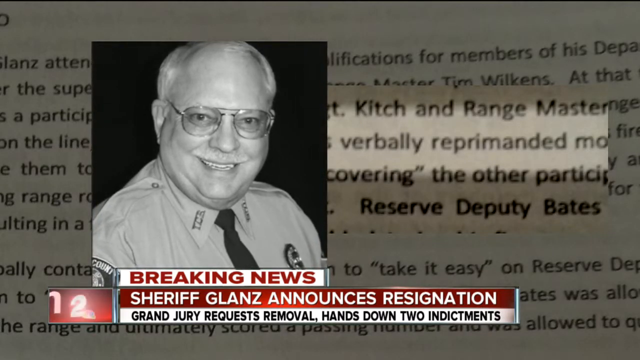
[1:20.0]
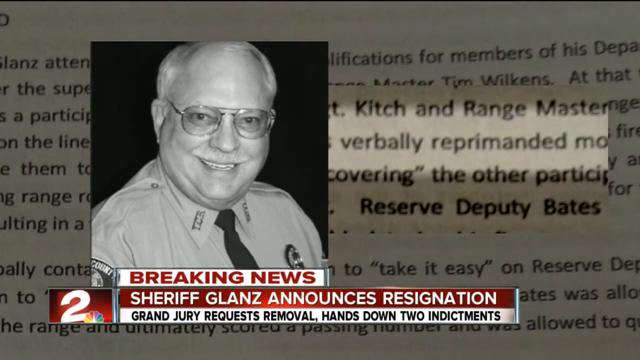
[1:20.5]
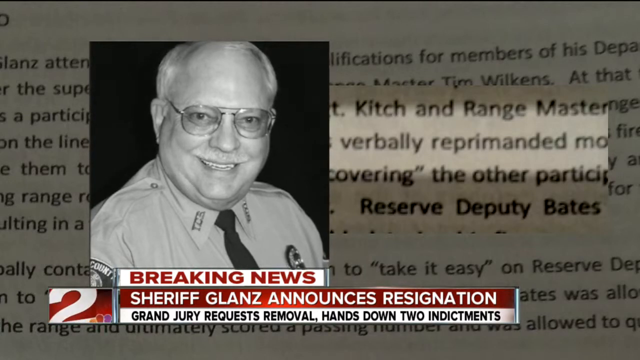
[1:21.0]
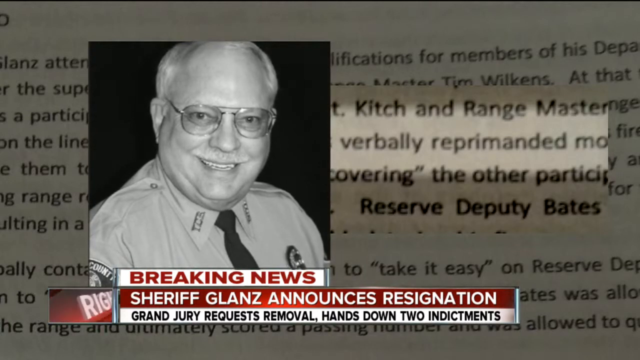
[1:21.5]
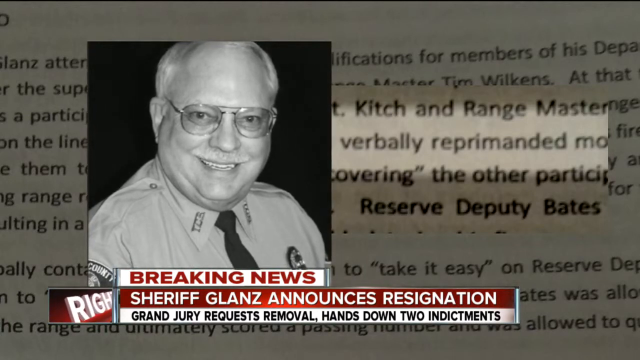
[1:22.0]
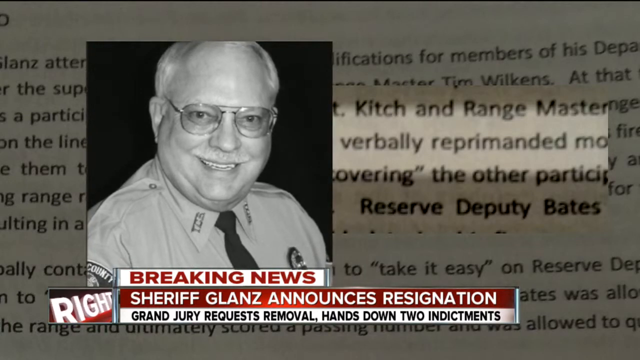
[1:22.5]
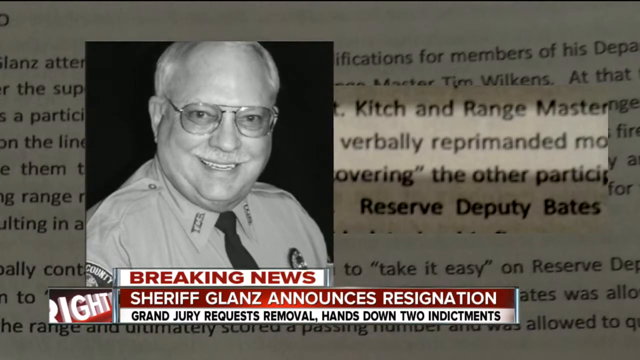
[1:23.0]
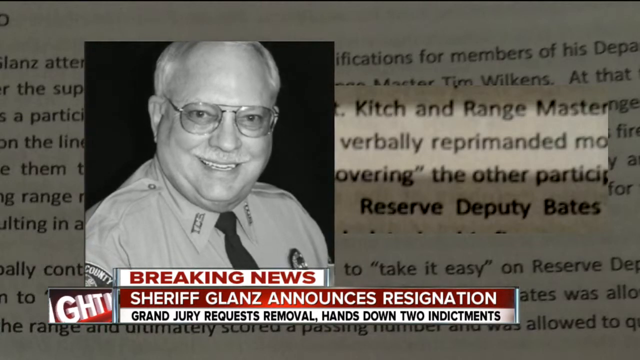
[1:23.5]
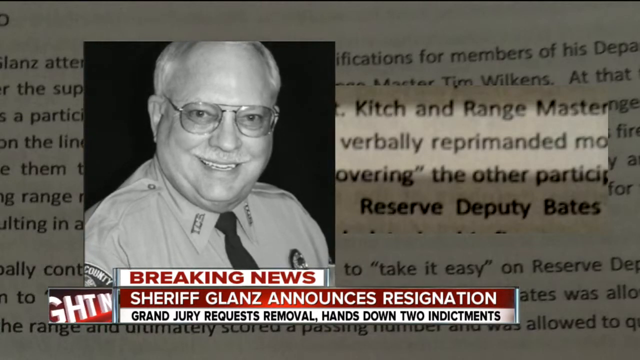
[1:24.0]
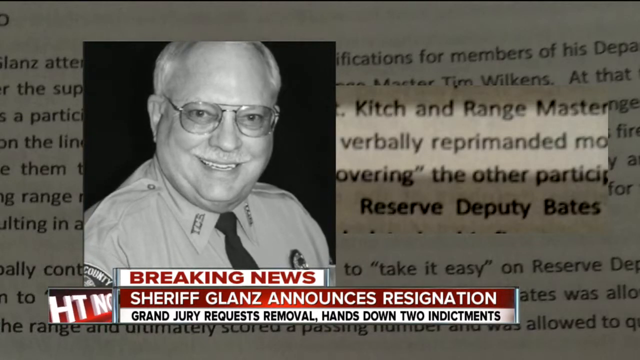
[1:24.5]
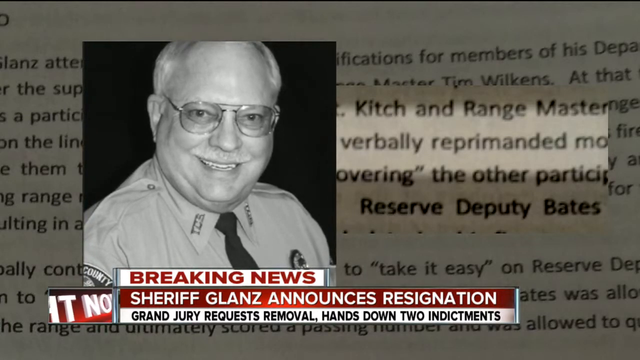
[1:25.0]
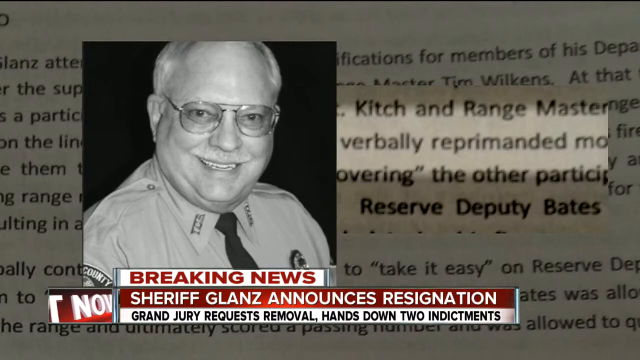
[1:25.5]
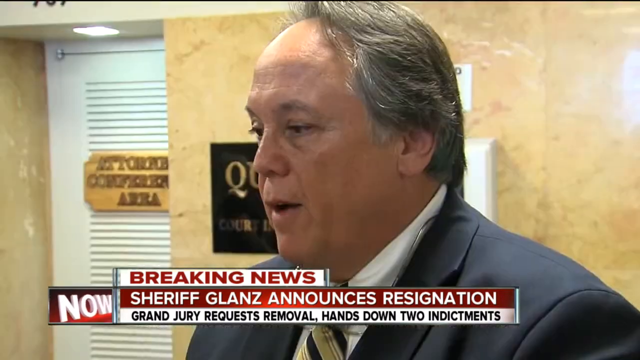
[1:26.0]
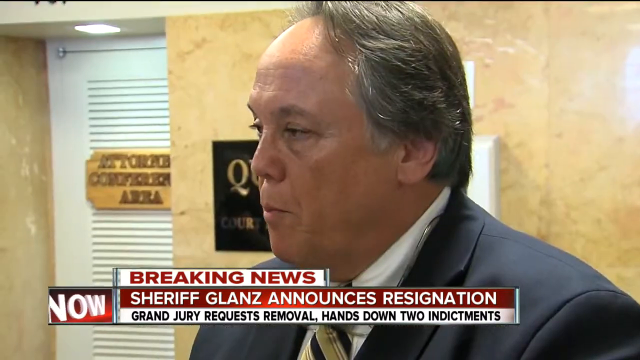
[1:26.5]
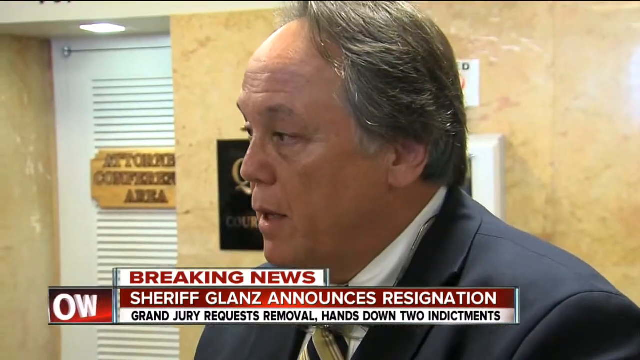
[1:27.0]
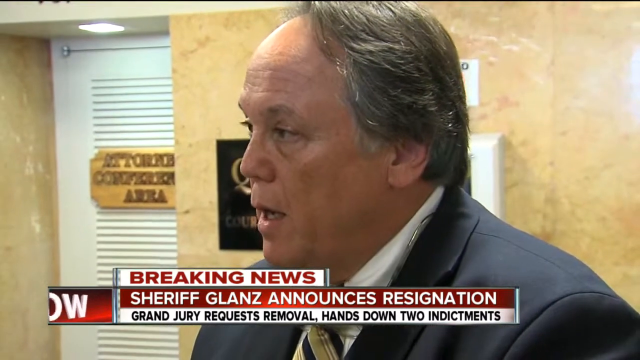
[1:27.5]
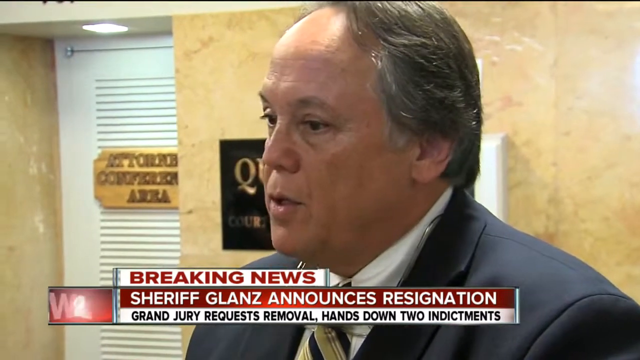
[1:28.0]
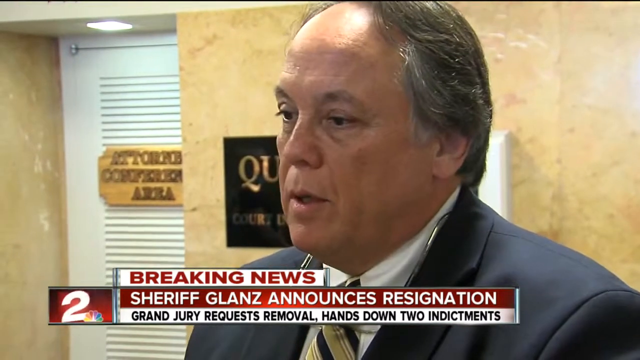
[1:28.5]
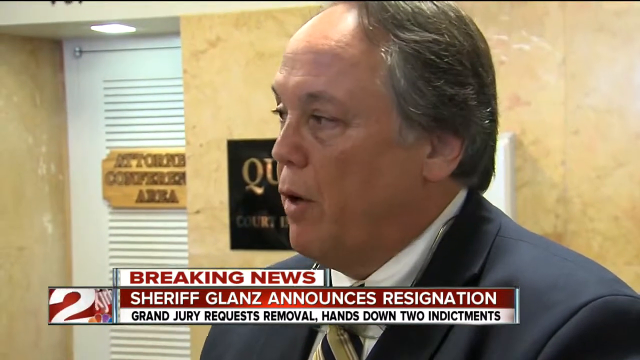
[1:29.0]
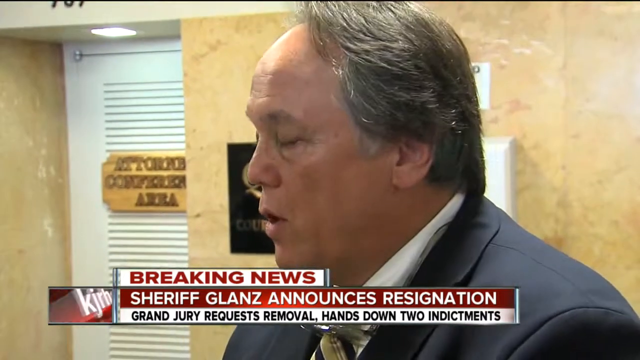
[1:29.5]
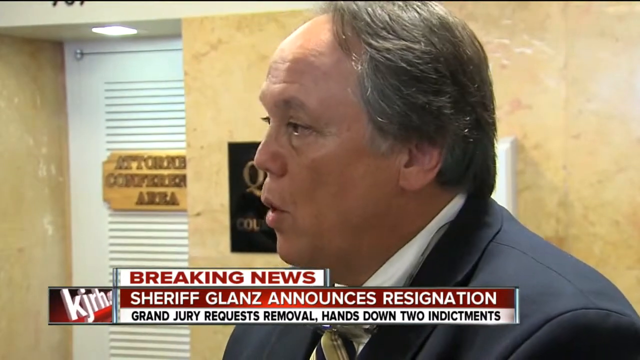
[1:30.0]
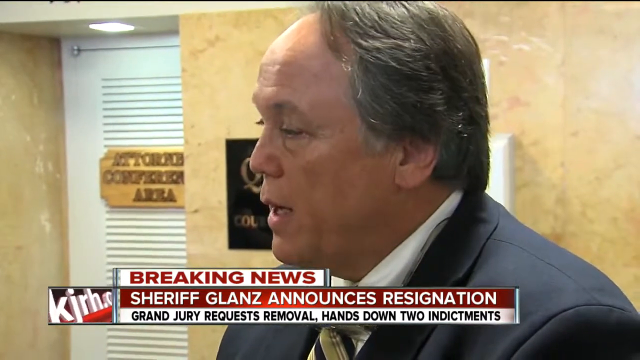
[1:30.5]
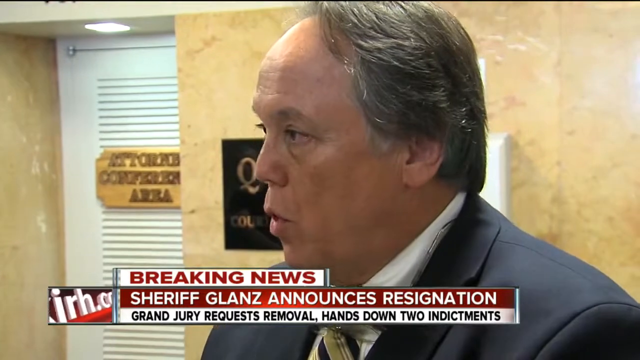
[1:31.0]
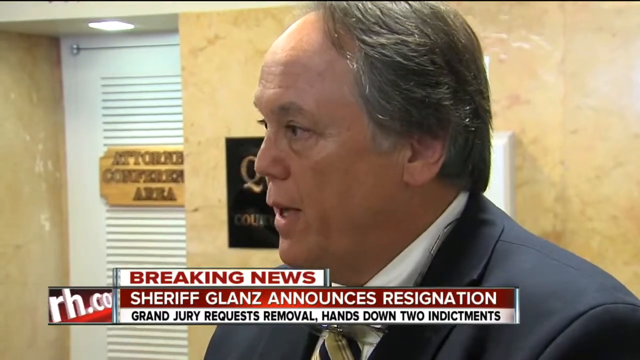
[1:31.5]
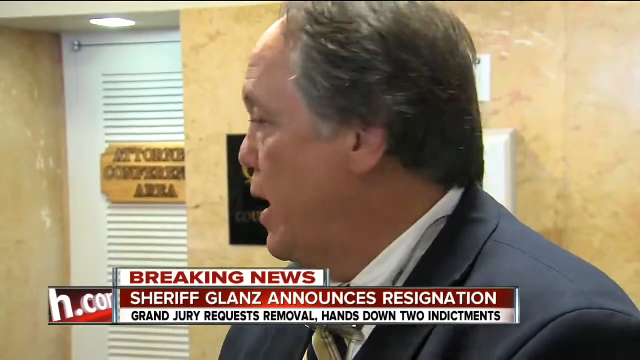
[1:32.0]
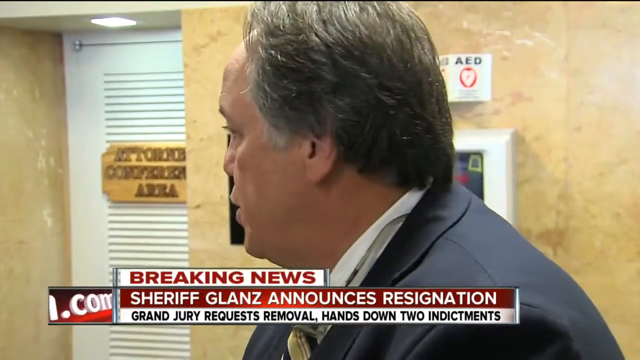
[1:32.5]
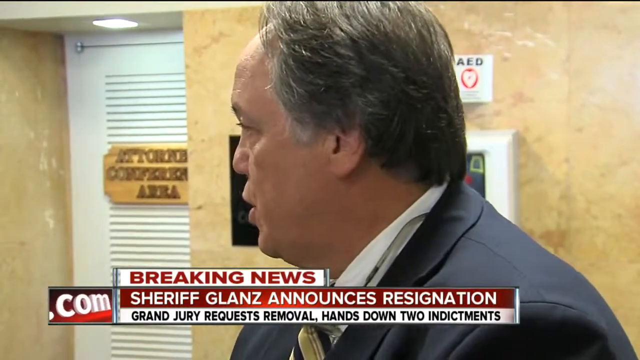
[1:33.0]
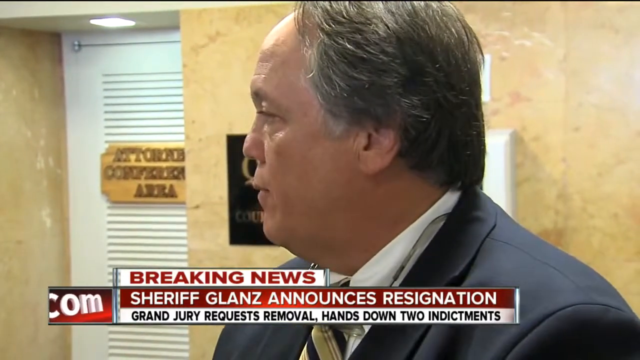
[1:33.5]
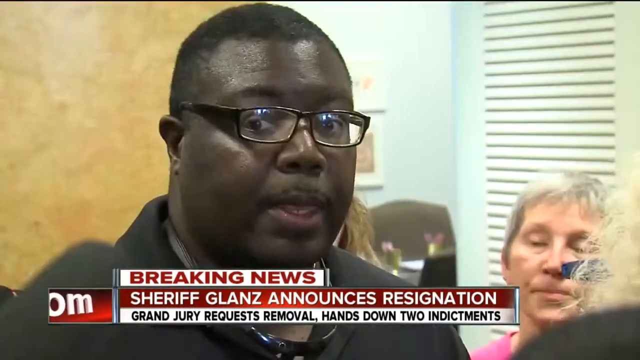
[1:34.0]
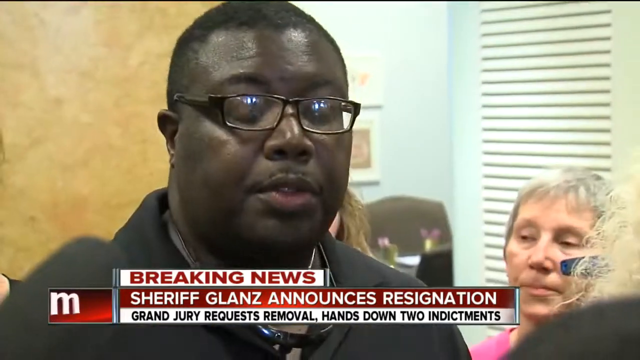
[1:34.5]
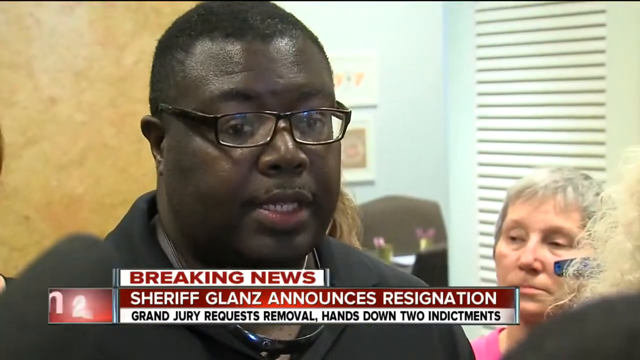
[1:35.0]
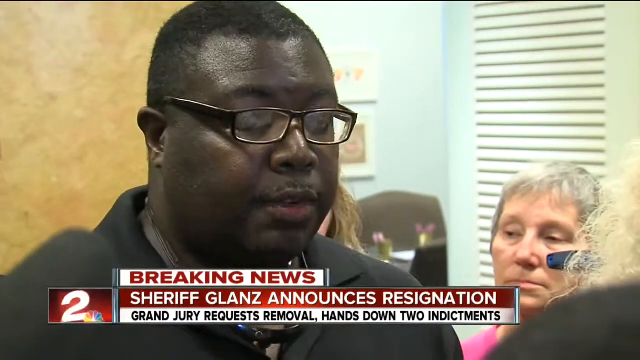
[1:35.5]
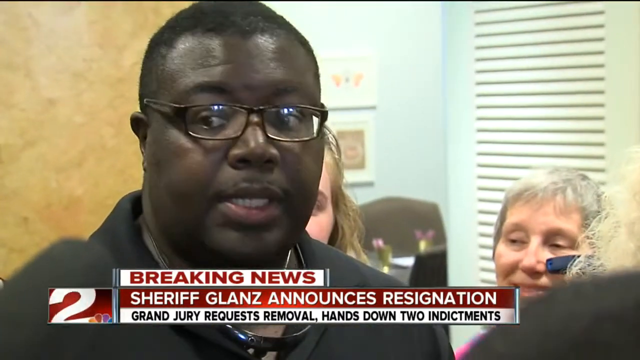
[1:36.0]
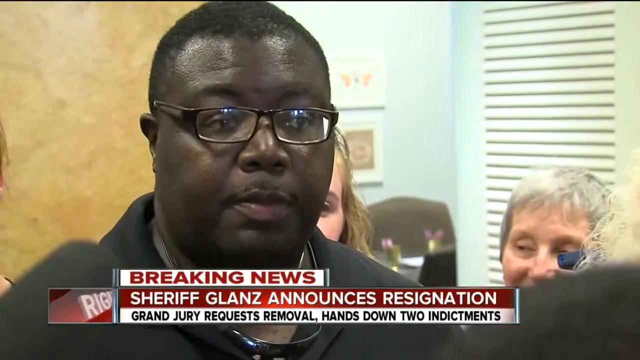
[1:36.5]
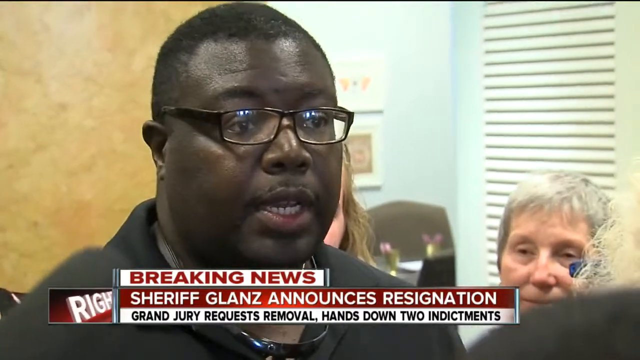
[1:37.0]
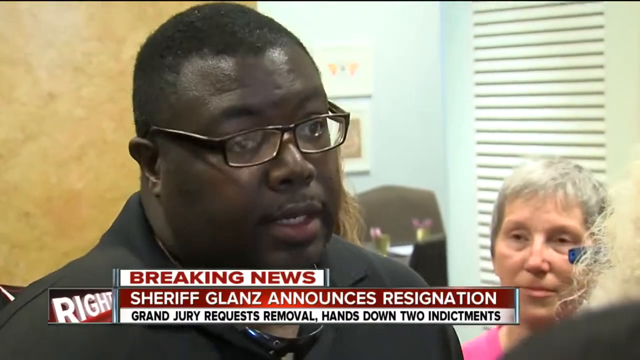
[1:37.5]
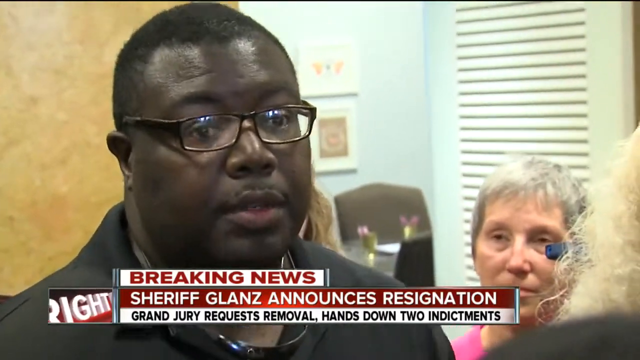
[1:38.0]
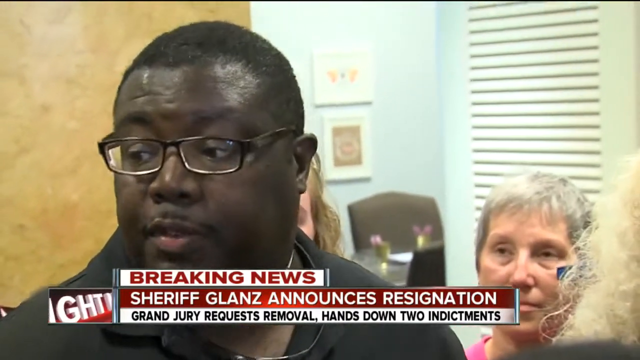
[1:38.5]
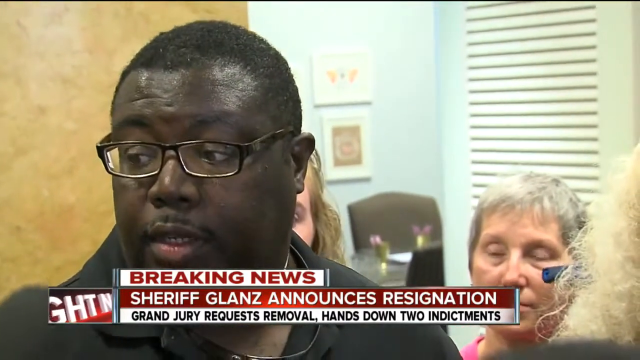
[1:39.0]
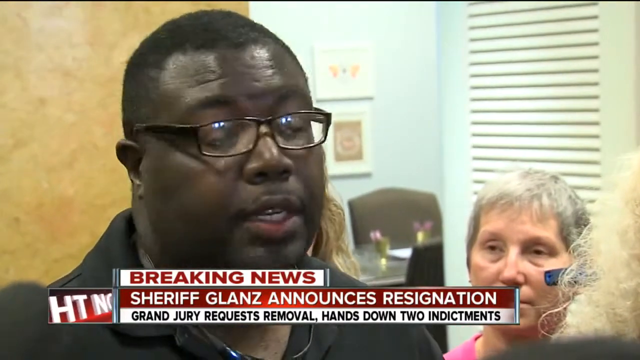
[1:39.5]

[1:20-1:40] The breaking news banner reads "Sheriff Glanz announces resignation." A black and white photo shows an elderly white male wearing glasses, a sheriff's uniform and a black tie, smiling. Part of the memo is in the background, with a highlighted part that says "Rangemaster verbally reprimanded." The video transitions to a white male in his mid-50s with short gray hair, a large forehead and a flat nose, wearing a dark blue suit jacket and a white collared shirt. Behind him are a yellow wall and a white door with a sign that says "conference area." He speaks, facing slightly to his right. The video then transitions to a black male with short black hair and black glasses, speaking toward the camera and looking to his right, then to his right again. Behind him is a short white female with short white hair, and an open white door with slits in it, beyond which is an office with a gray office chair visible and a light green wall. A white female with shorter-length blonde hair is directly behind the black male.